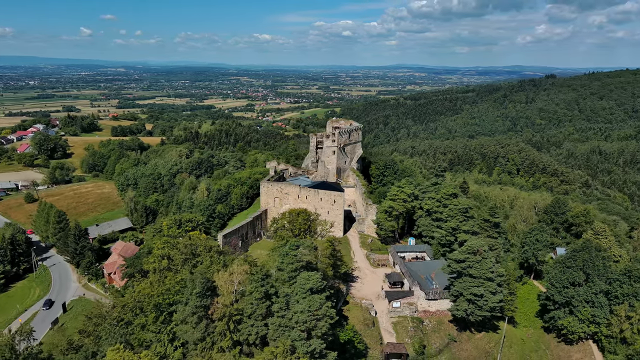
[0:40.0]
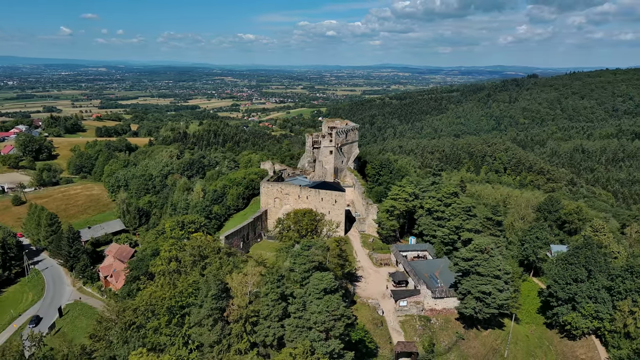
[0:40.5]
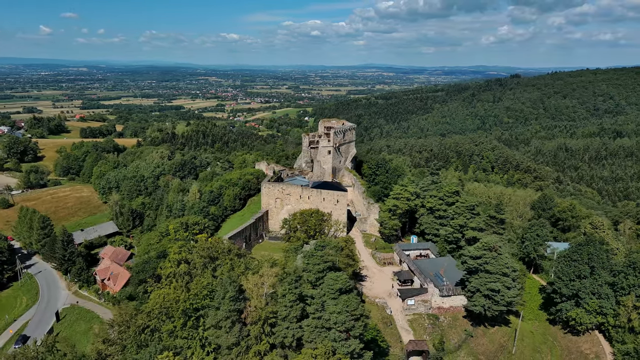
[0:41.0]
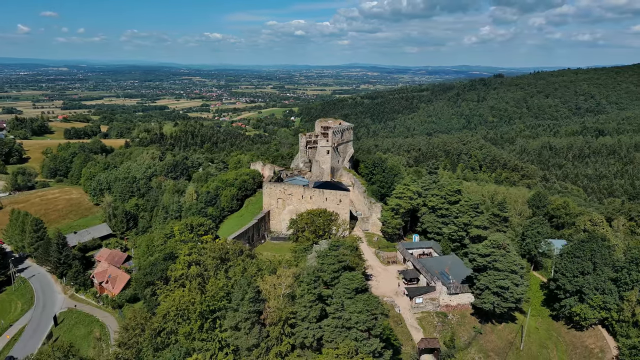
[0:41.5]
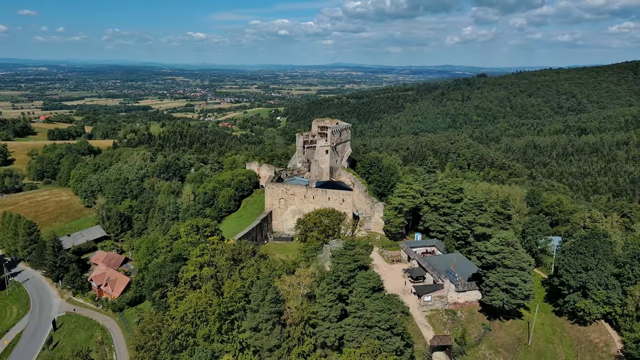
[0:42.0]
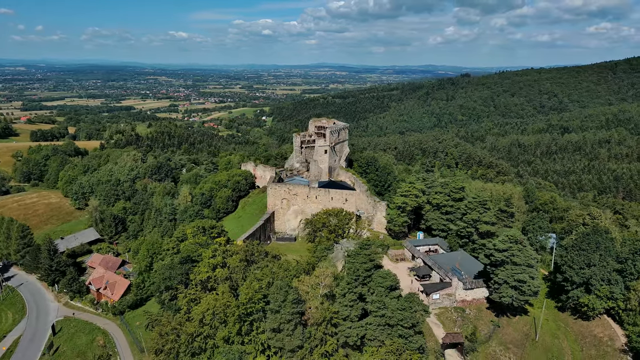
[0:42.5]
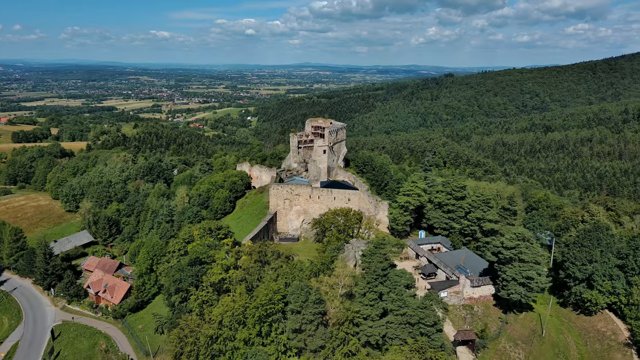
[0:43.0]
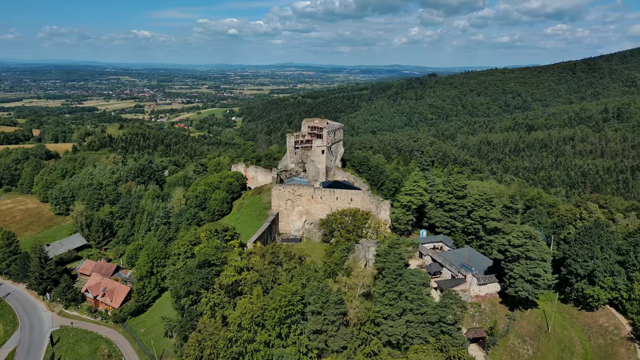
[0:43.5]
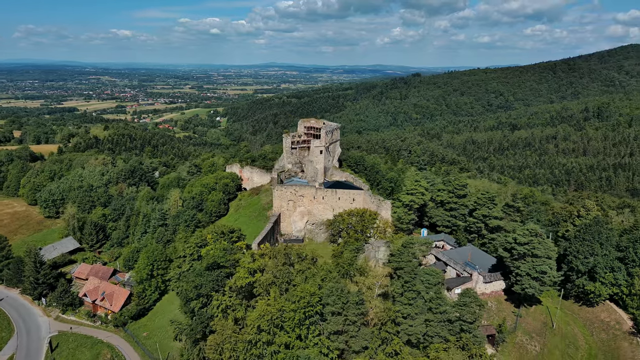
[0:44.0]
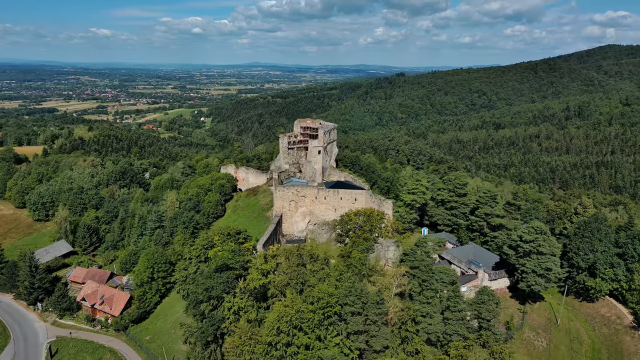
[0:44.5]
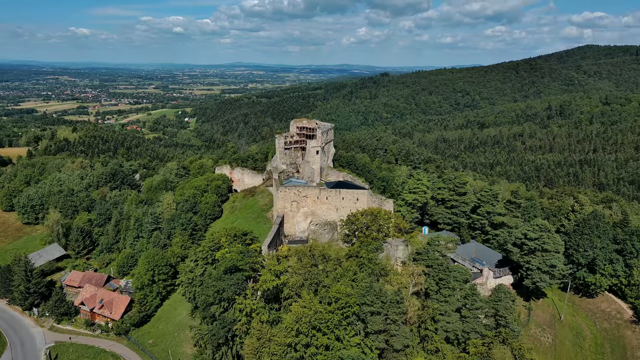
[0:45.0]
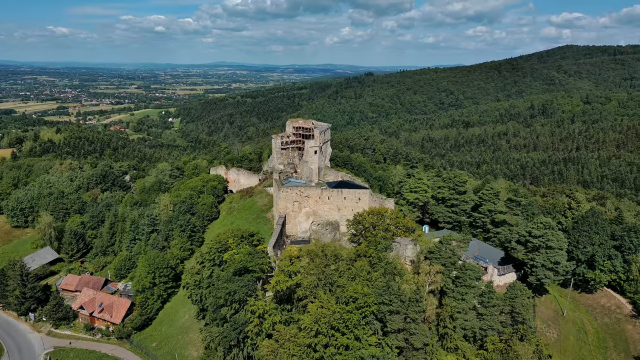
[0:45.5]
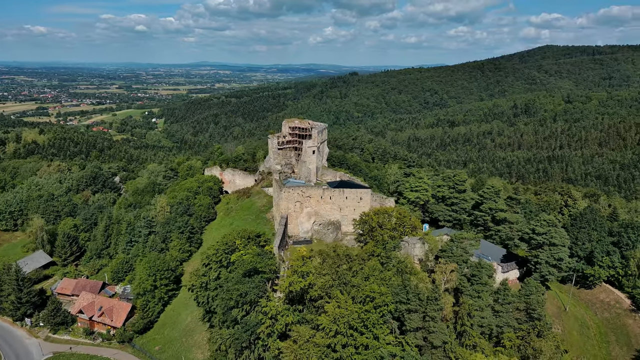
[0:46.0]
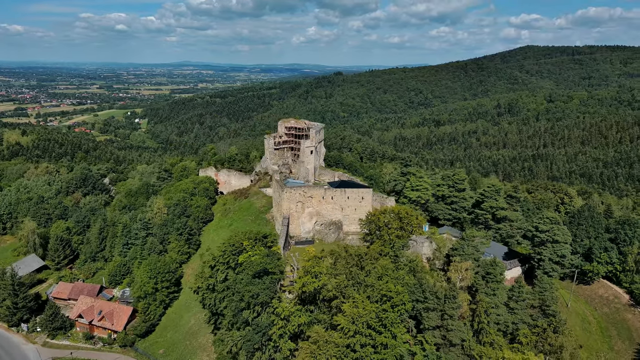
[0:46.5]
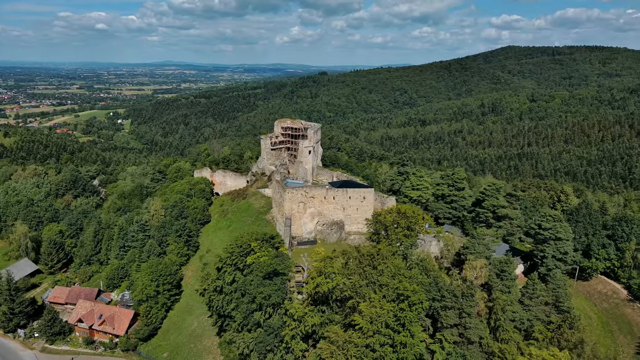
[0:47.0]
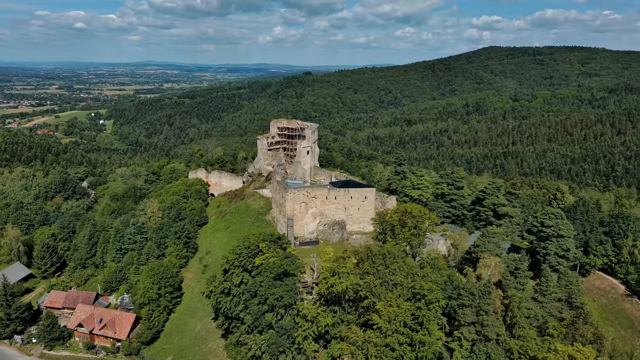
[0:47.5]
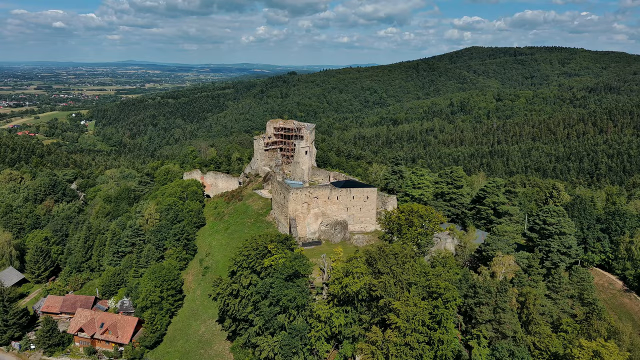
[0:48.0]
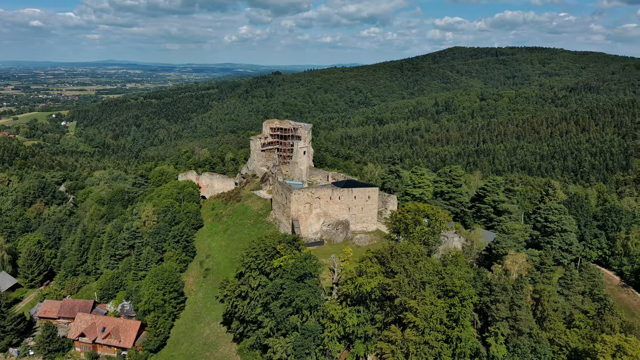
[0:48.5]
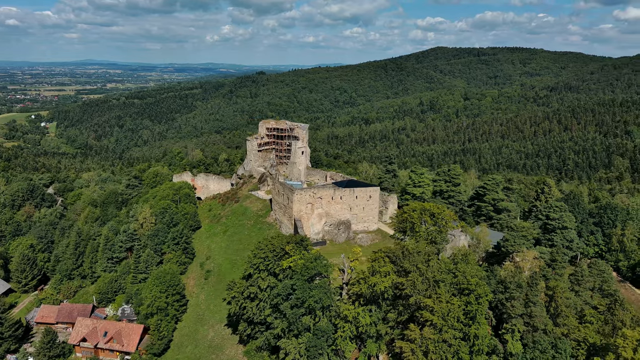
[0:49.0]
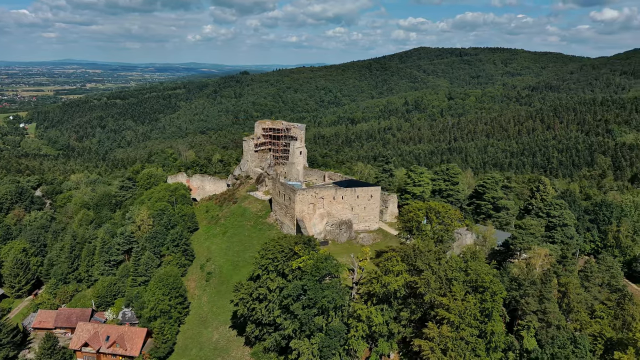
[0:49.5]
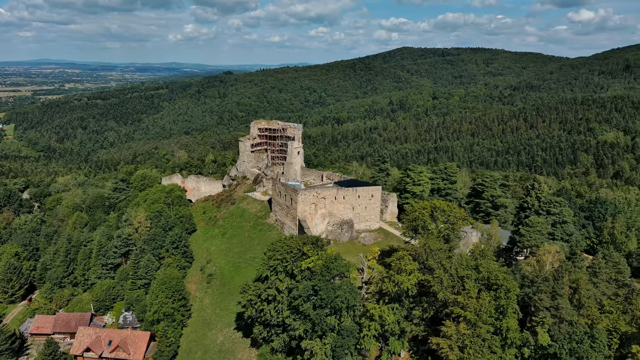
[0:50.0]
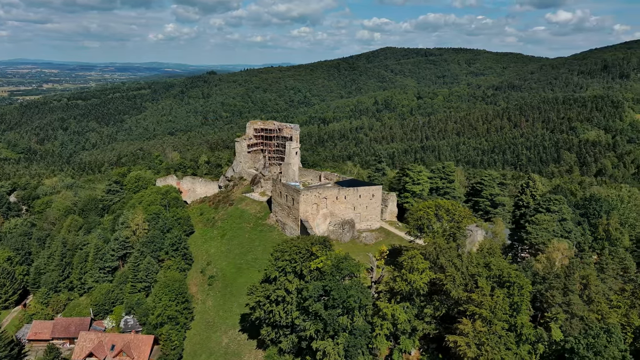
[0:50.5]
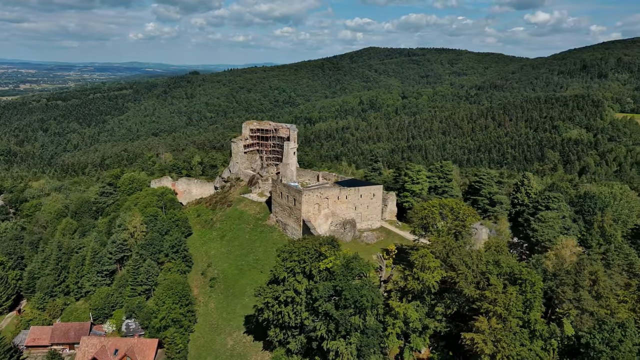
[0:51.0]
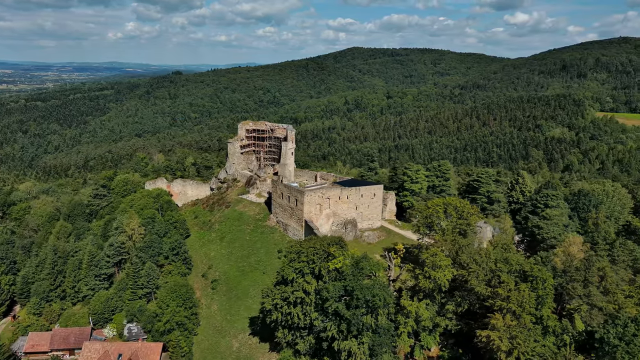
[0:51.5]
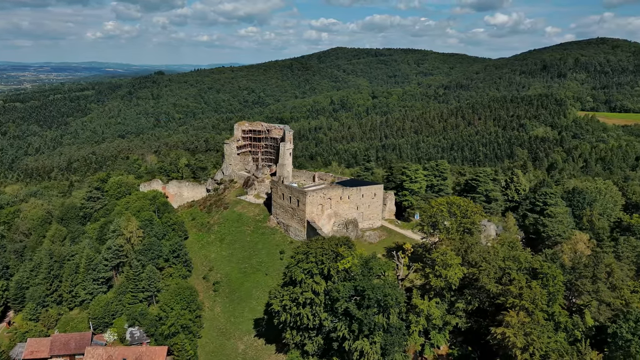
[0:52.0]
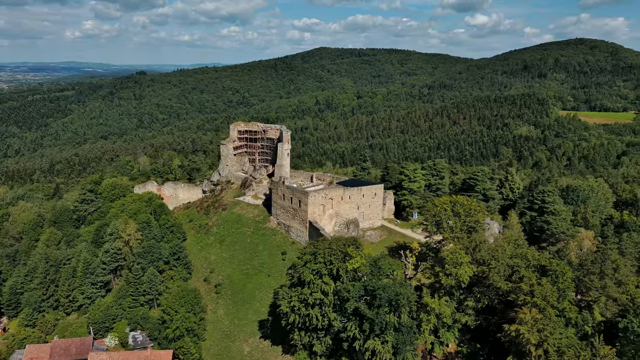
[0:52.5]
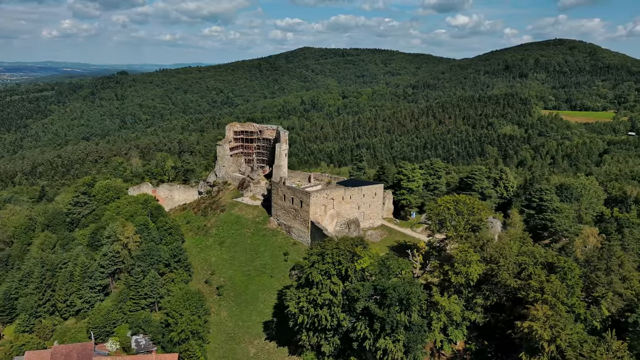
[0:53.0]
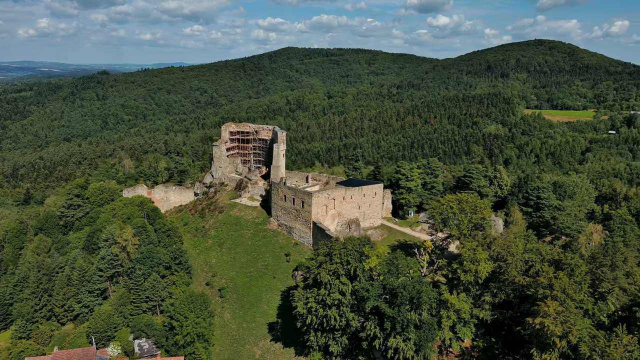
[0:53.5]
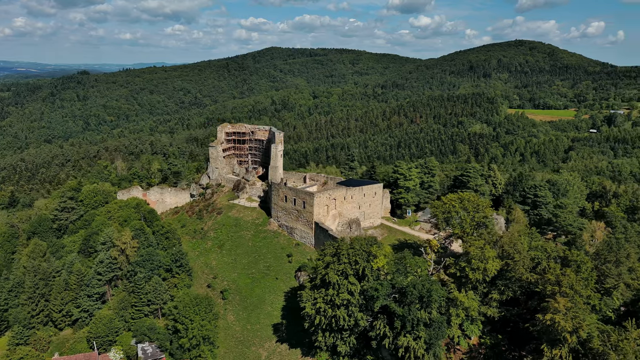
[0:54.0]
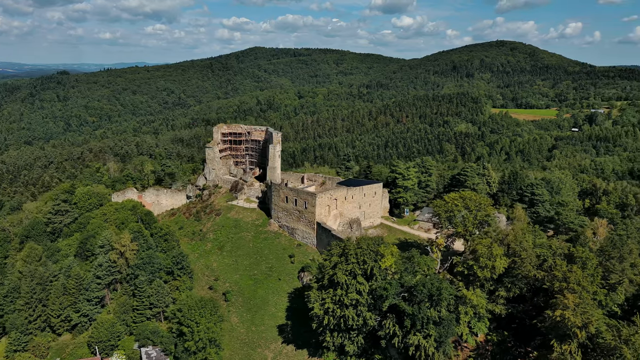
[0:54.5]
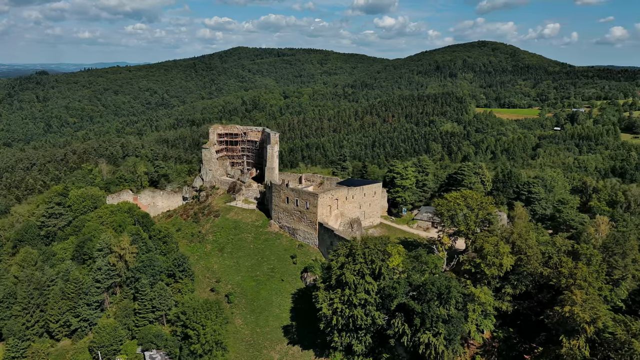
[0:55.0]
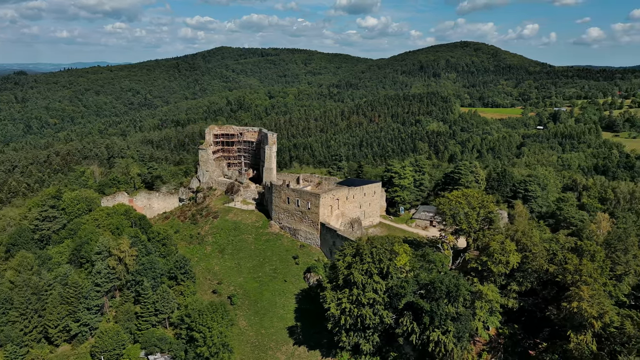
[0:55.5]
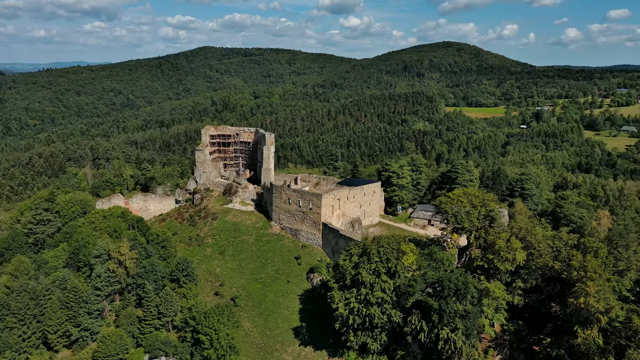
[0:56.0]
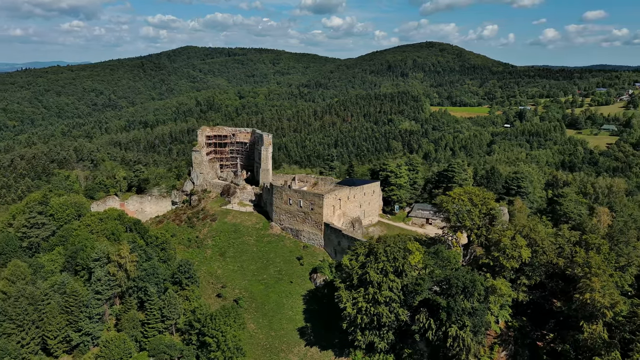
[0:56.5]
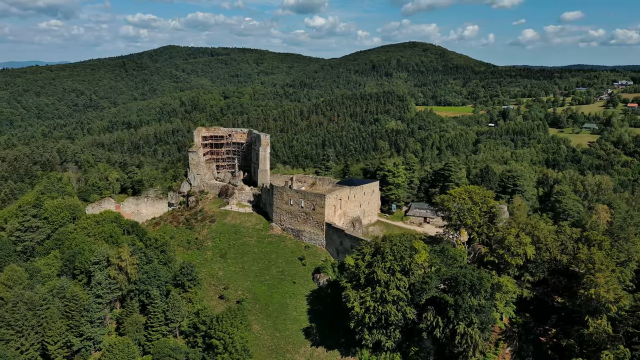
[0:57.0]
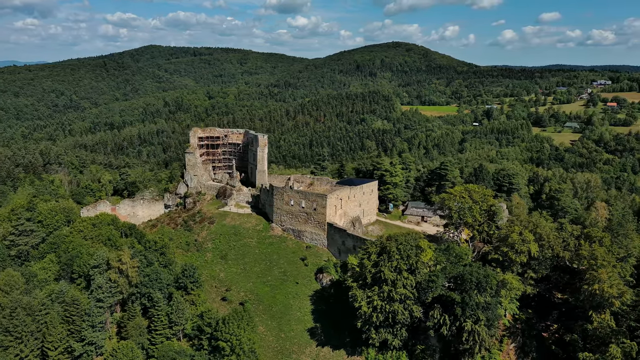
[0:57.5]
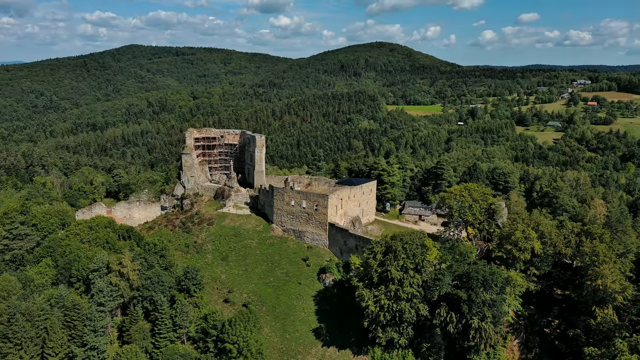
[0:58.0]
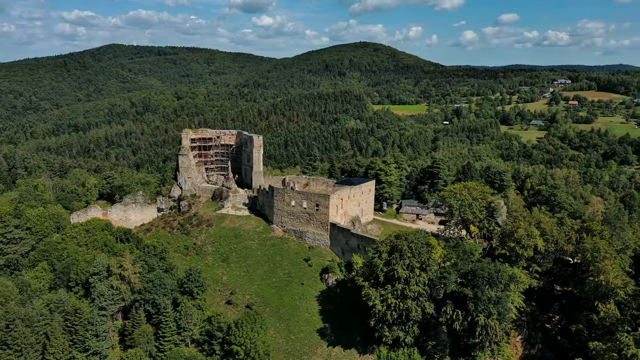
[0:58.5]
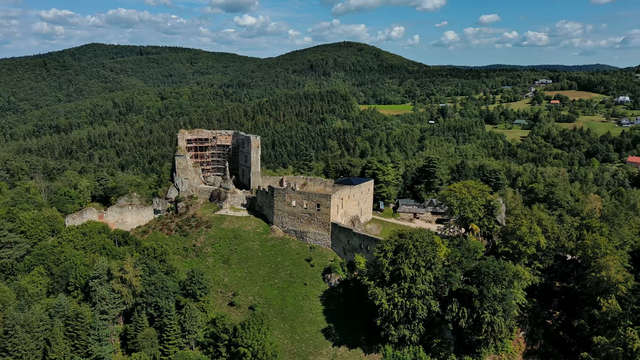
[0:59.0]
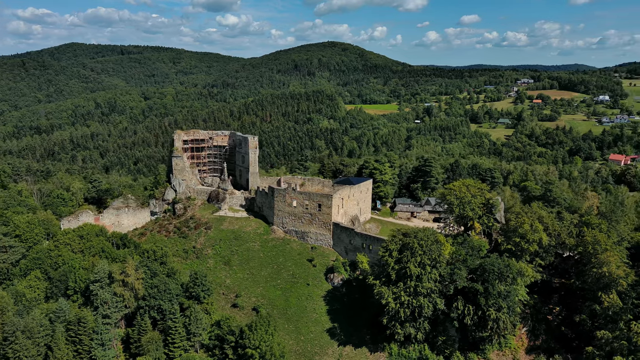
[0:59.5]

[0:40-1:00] The aerial view shows the very old structure, which could be some type of old fort and is apparently 60 to 80 feet tall. It has two different sections, and part of it has been torn down or broken away. The camera moves around the structure, revealing the countryside behind it: hills, forest, plains, and a few homes scattered throughout.